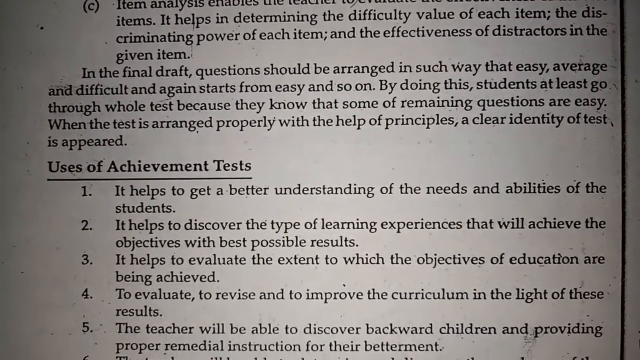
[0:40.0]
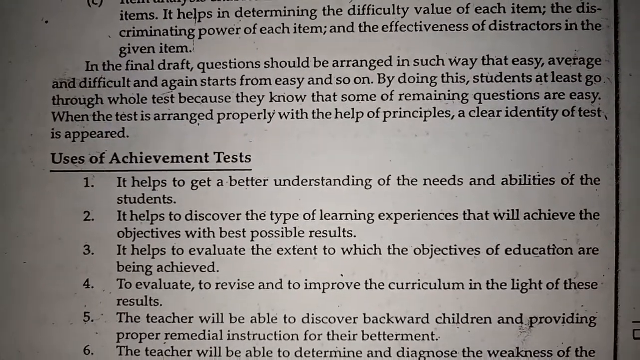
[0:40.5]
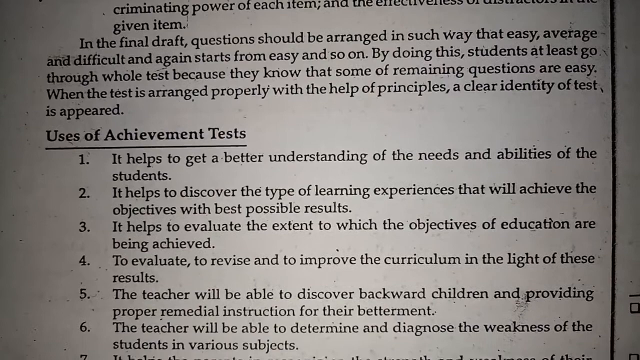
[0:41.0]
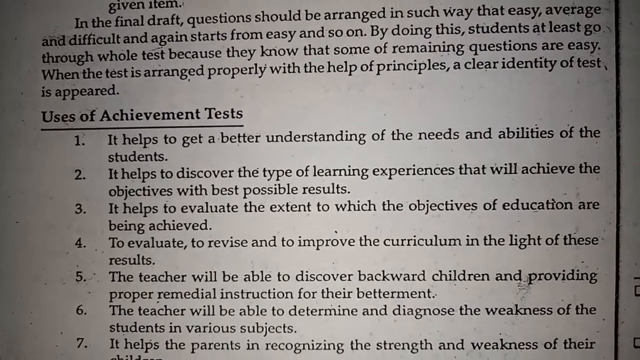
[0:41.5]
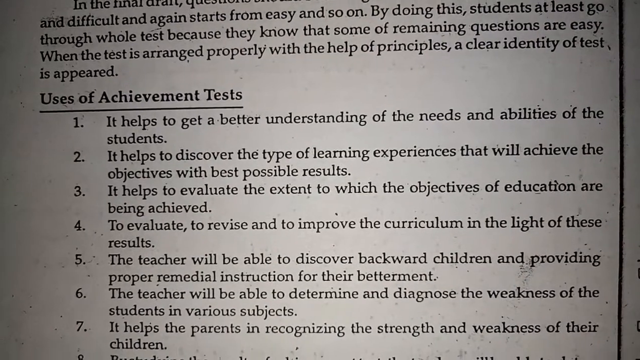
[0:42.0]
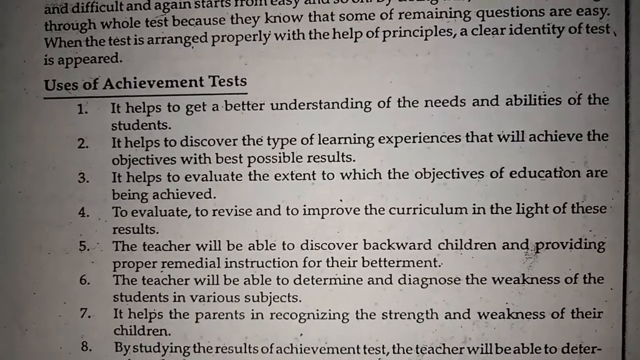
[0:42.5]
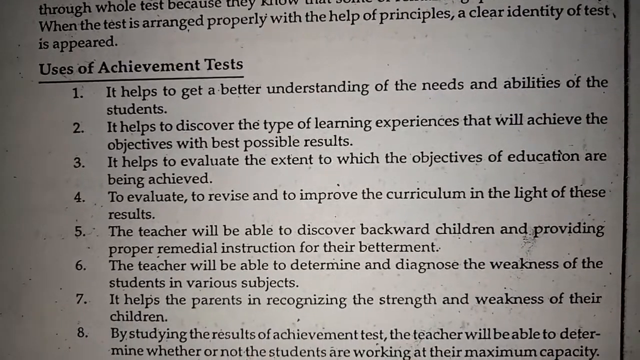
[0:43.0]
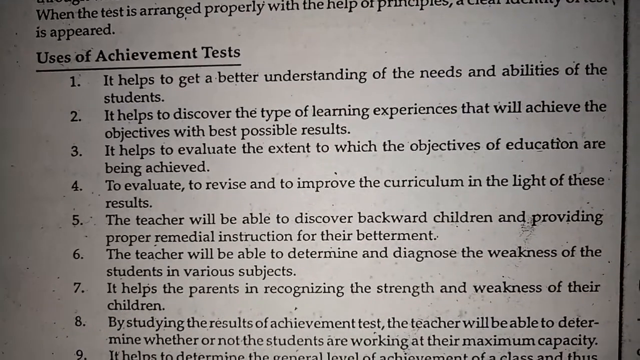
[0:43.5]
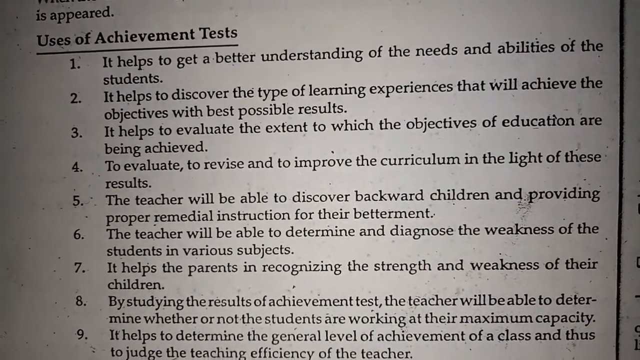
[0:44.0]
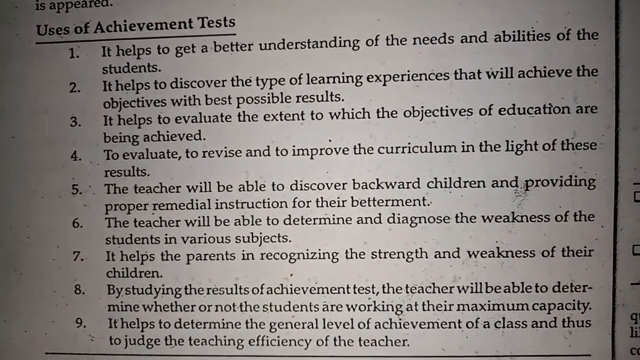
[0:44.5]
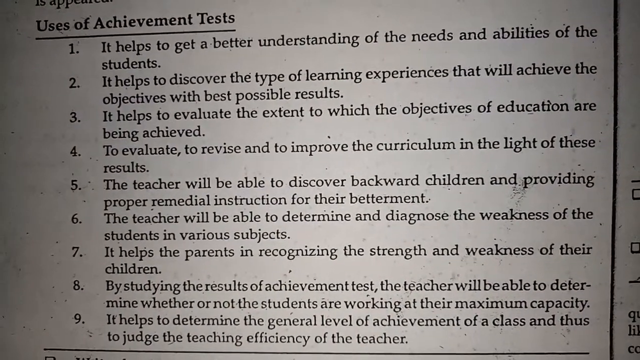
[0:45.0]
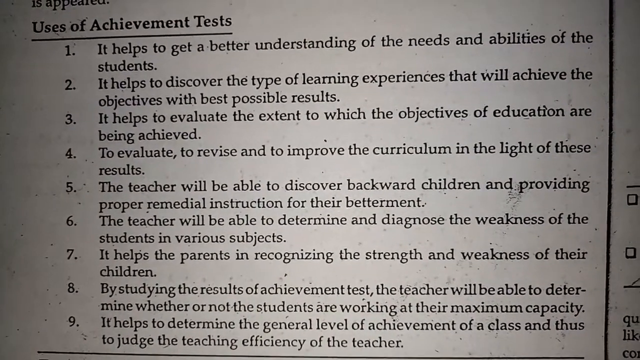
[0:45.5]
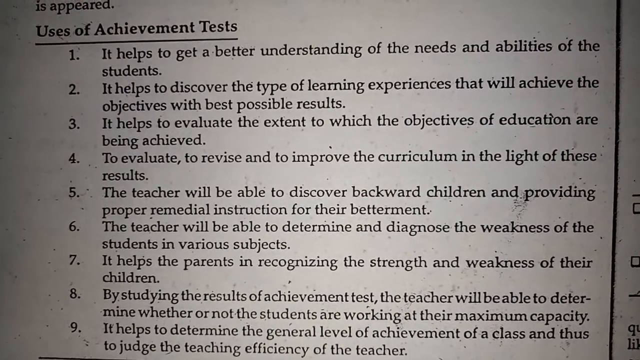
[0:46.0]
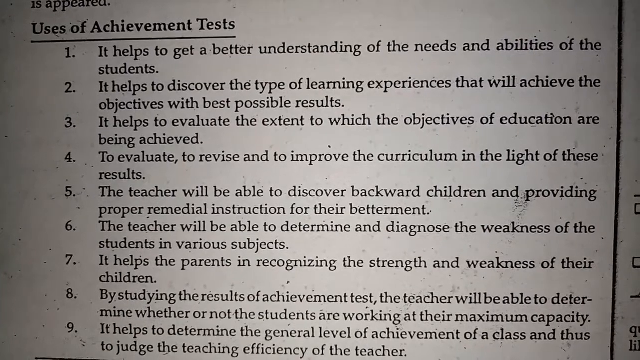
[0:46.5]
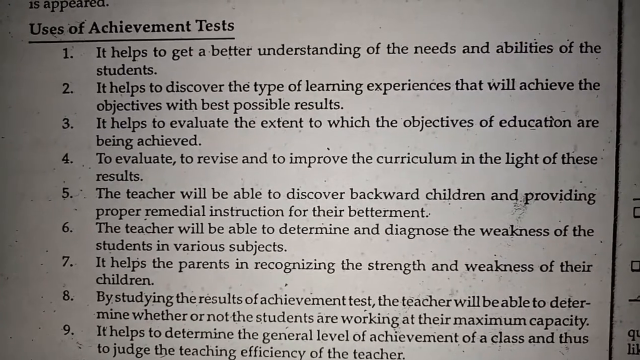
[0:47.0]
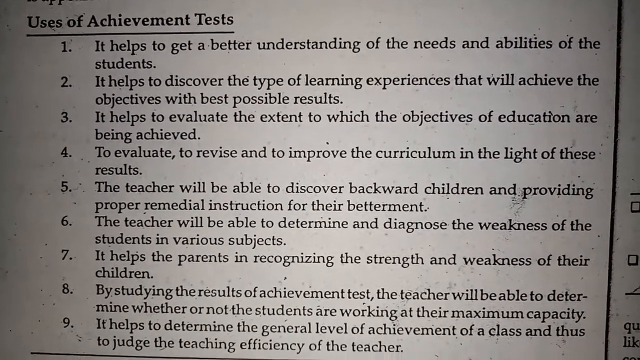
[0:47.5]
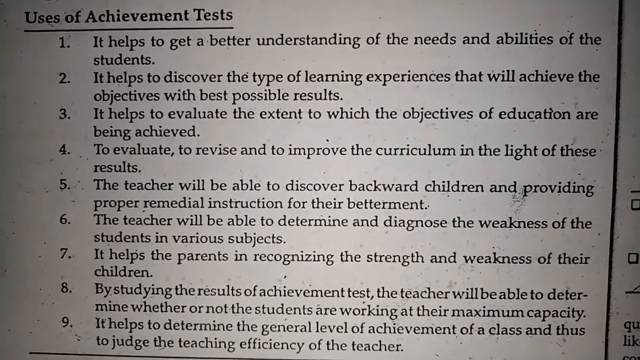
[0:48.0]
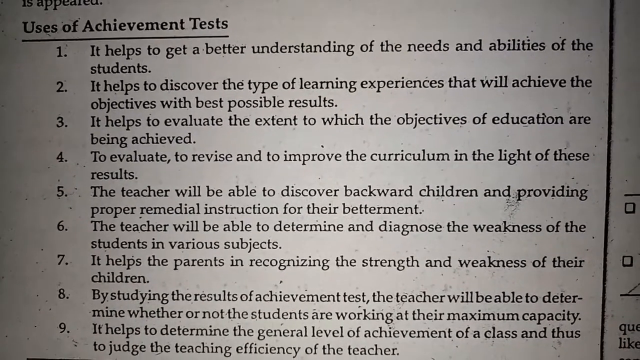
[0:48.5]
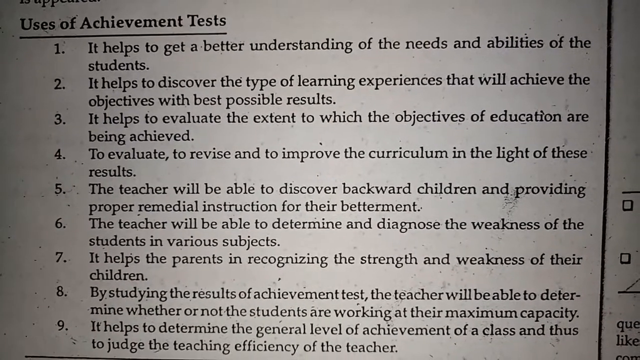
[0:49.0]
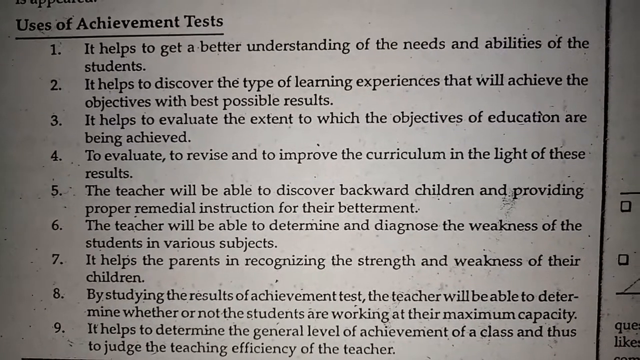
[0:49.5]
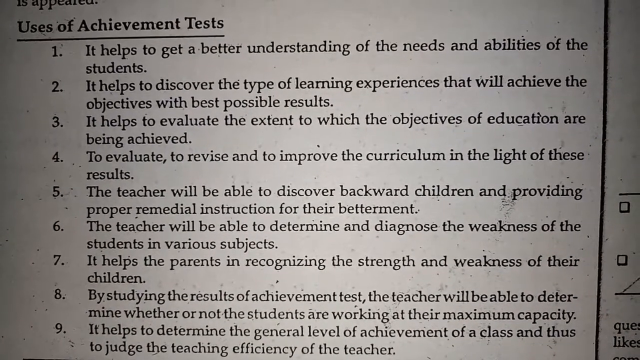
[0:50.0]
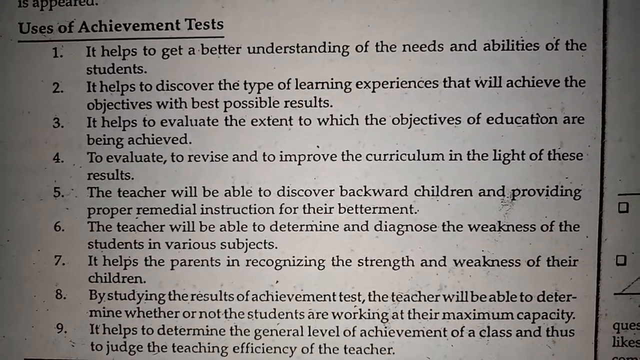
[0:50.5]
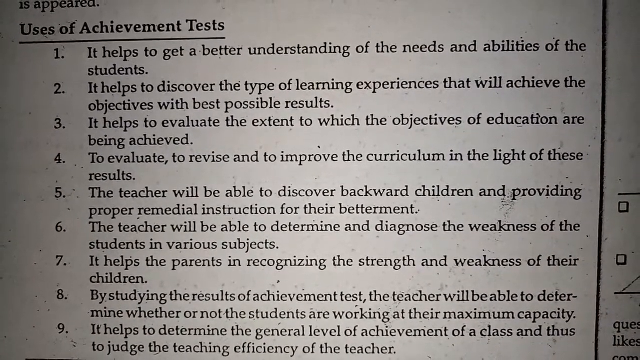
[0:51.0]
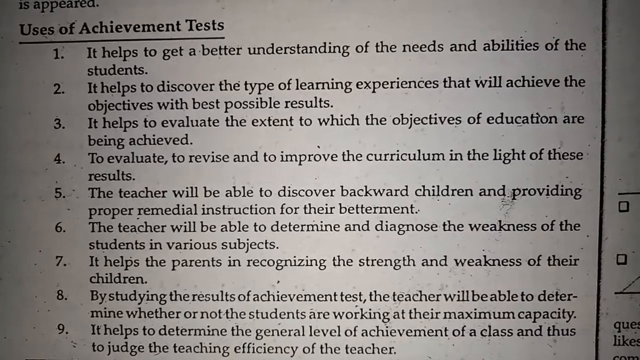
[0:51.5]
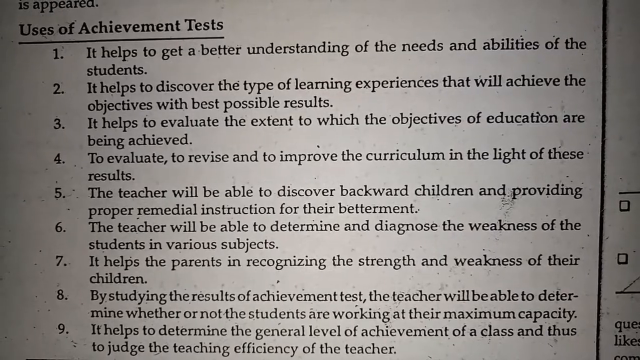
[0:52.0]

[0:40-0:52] The list of uses of achievement tests is shown. The first states "it helps to get a better understanding of the needs and abilities of the students"; two, "it helps to discover the type of learning experiences that will achieve the objectives with the best results"; three, "it helps to evaluate the extent to which objectives of education are being achieved"; four, "to evaluate, to revise, and to improve the curriculum in light of these results"; five, "the teacher will be able to discover backward children providing proper remedial instruction for their benefit"; six, "the teacher will be able to determine and diagnose the weakness of the students in various subjects"; seven, "it helps the parents in recognizing the strengths and weakness of their children"; eight, "by studying the results of achievement tests, the teacher will be able to determine whether or not the students are working at their maximum capacity"; and the ninth and final reason, "it helps to determine the general level of achievement of a class and thus to judge the teaching efficiency of the teacher."